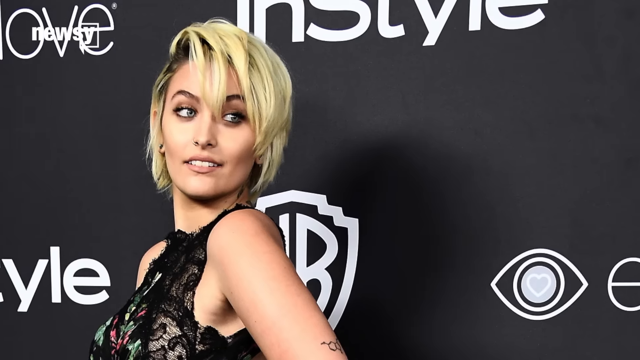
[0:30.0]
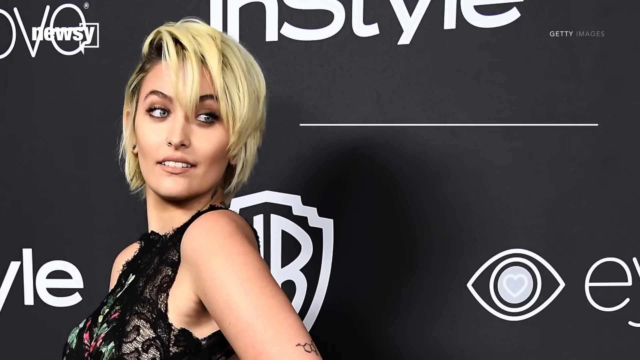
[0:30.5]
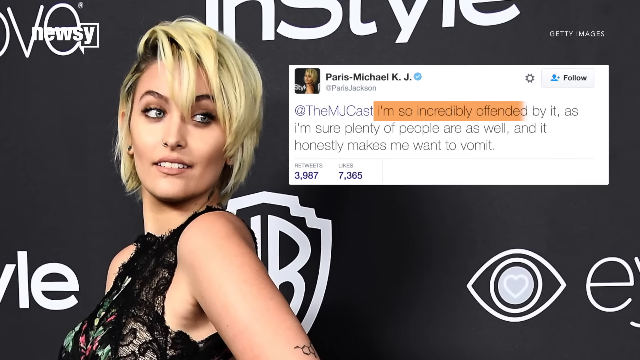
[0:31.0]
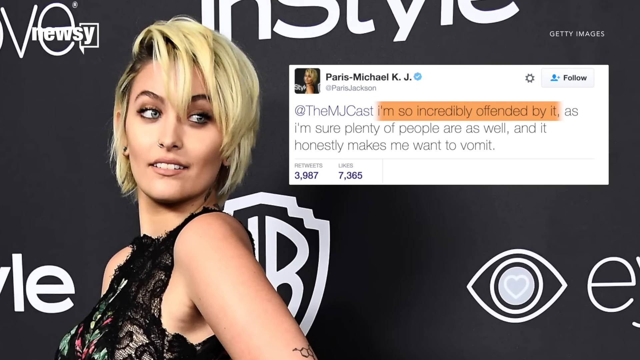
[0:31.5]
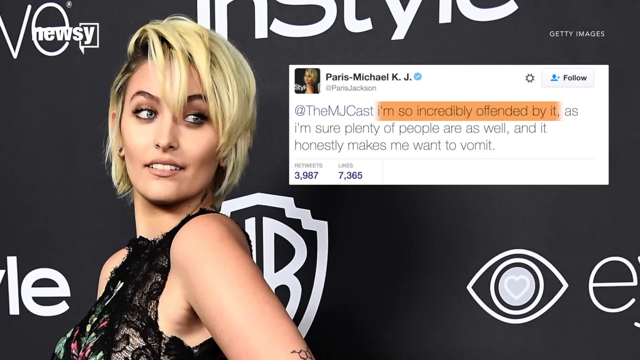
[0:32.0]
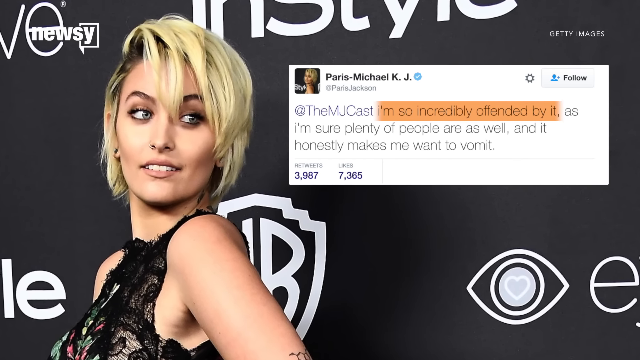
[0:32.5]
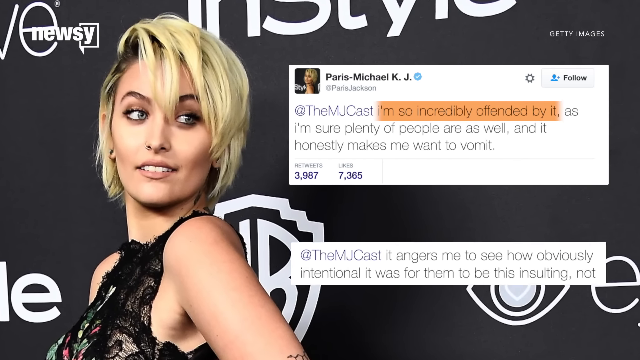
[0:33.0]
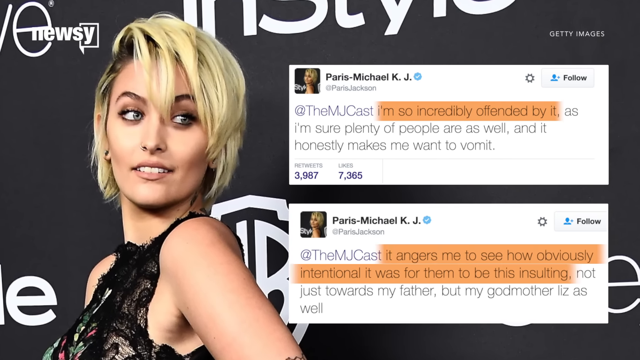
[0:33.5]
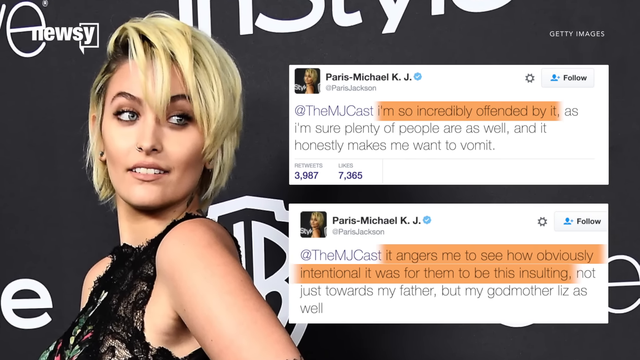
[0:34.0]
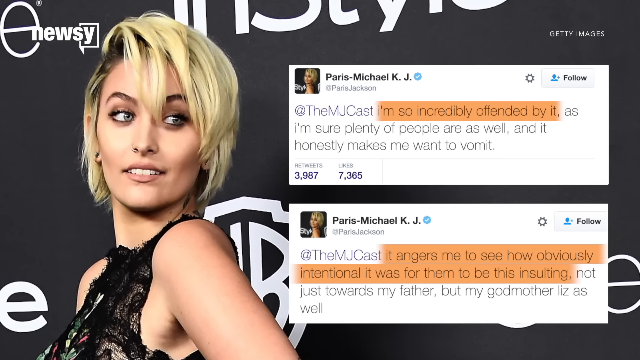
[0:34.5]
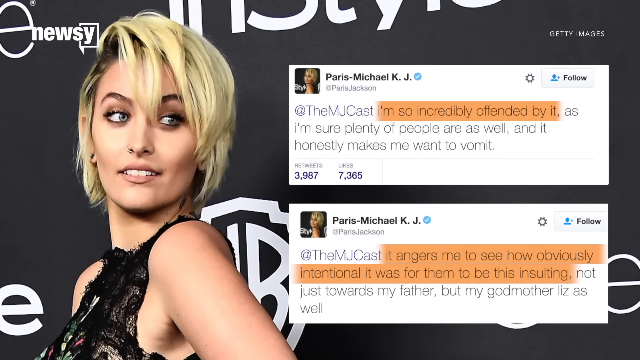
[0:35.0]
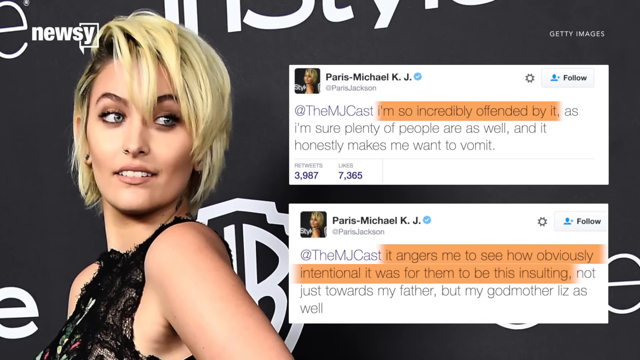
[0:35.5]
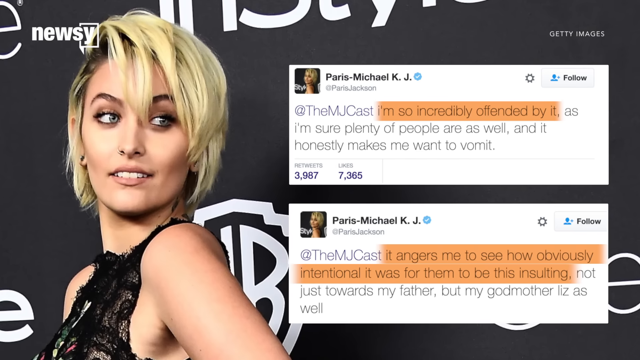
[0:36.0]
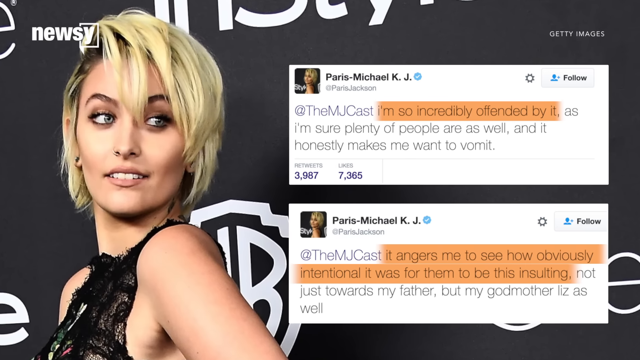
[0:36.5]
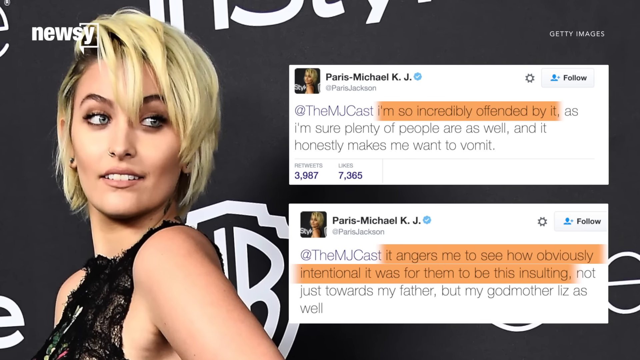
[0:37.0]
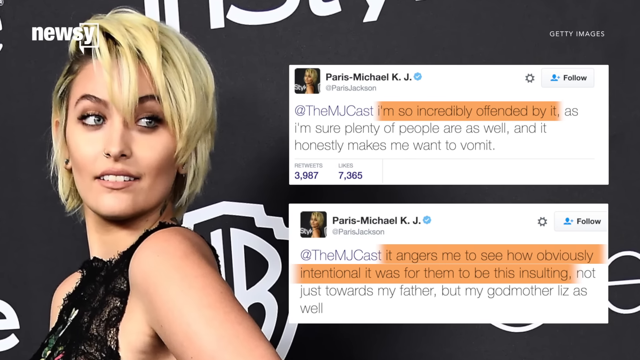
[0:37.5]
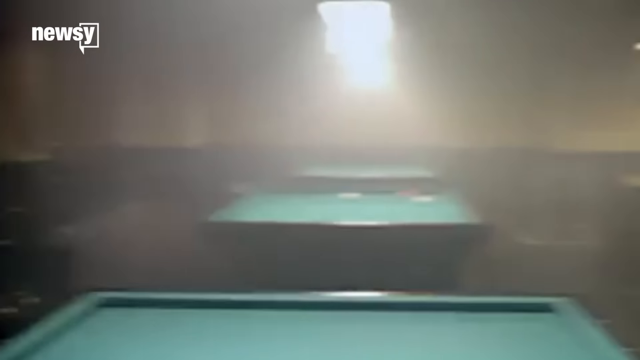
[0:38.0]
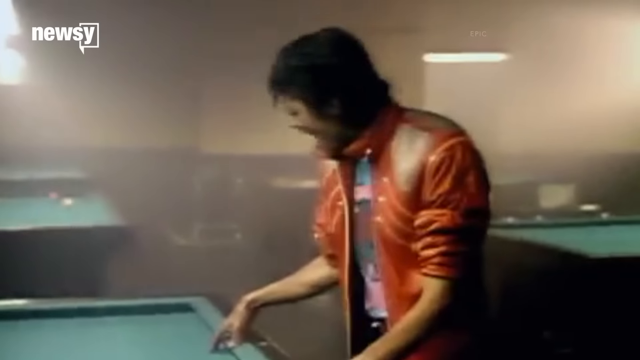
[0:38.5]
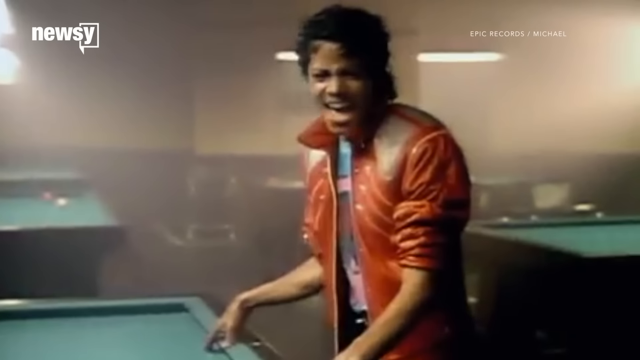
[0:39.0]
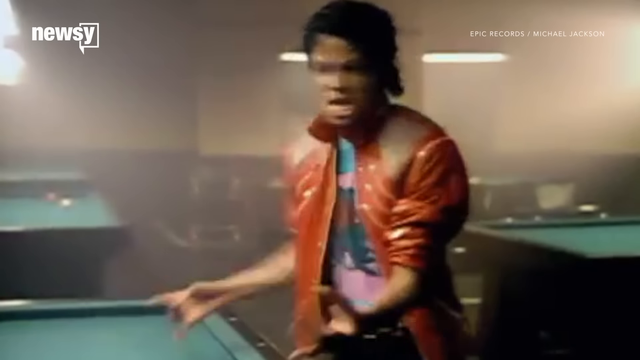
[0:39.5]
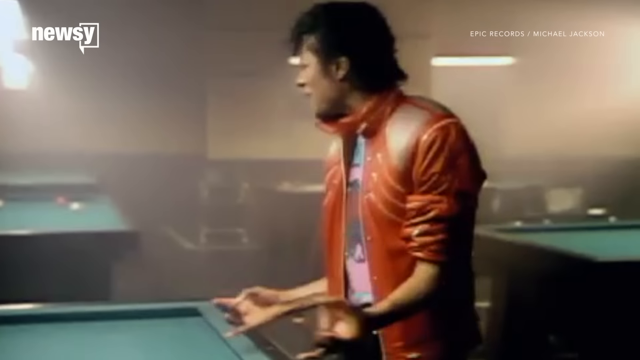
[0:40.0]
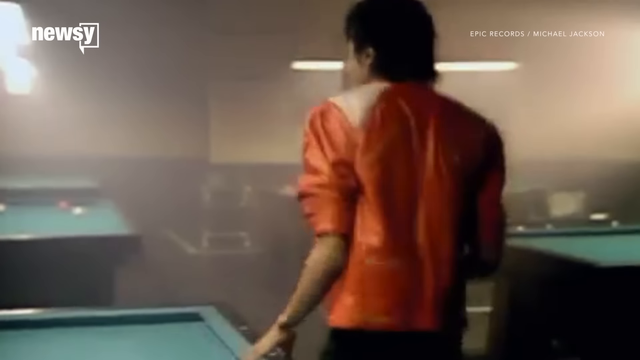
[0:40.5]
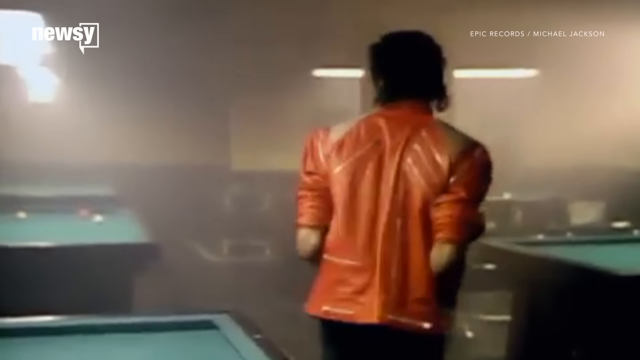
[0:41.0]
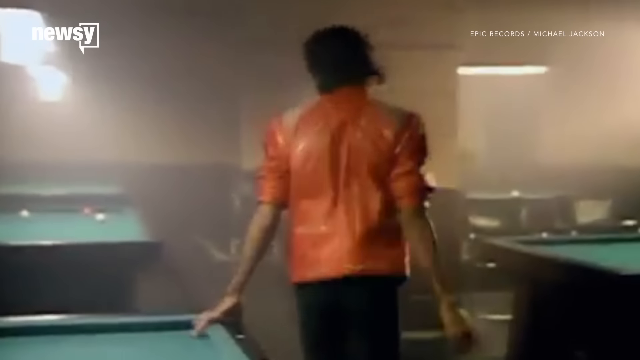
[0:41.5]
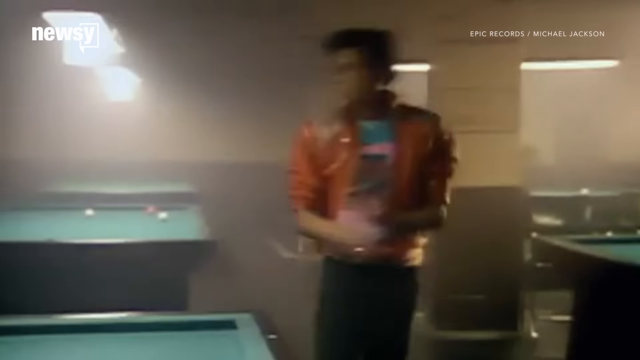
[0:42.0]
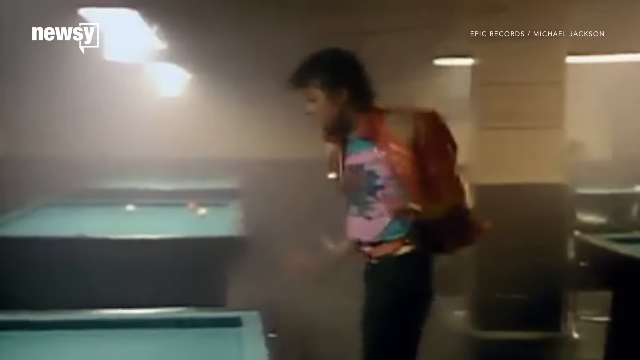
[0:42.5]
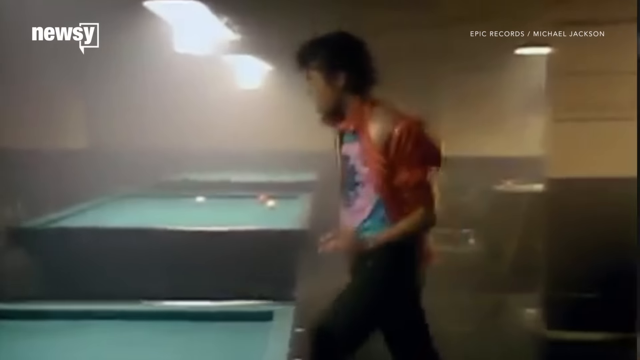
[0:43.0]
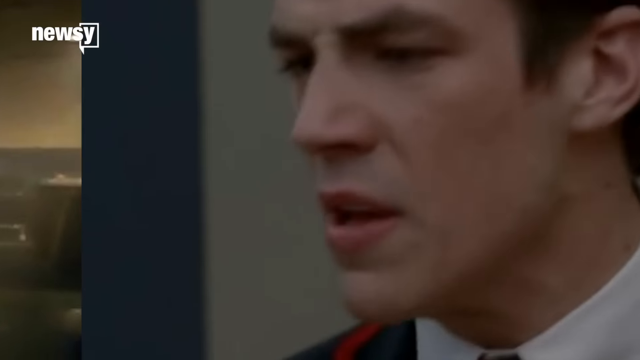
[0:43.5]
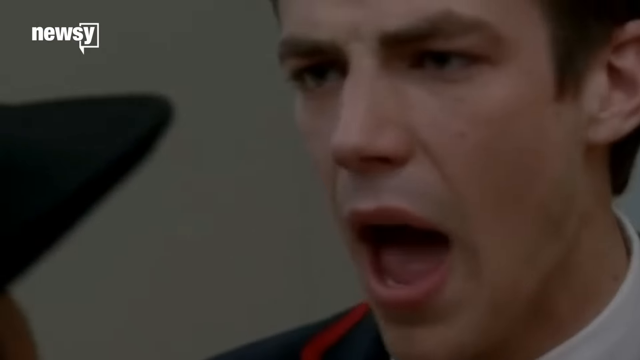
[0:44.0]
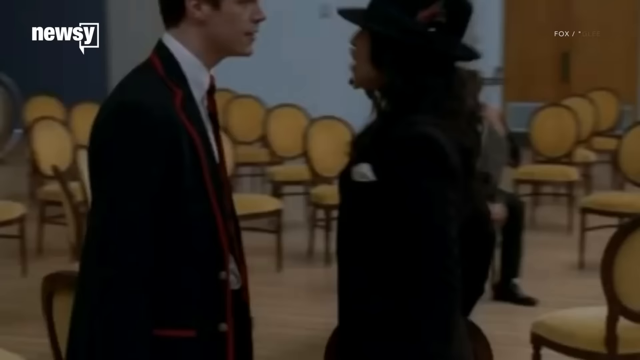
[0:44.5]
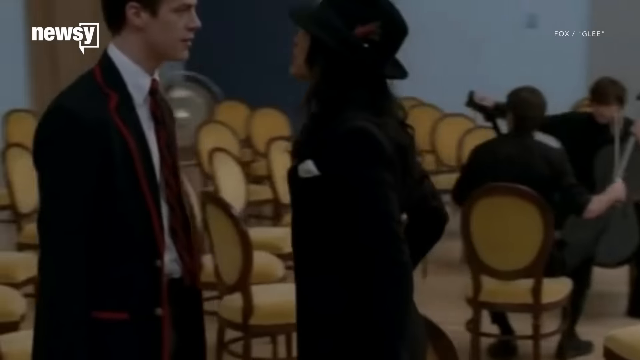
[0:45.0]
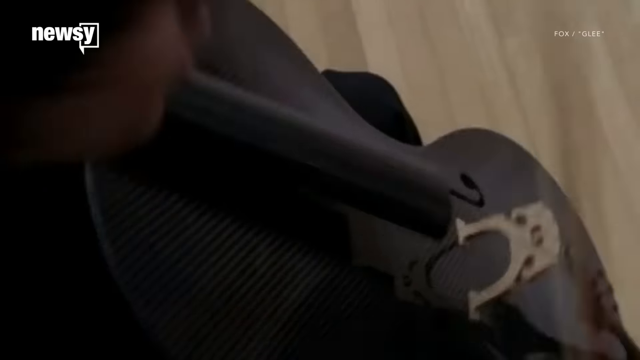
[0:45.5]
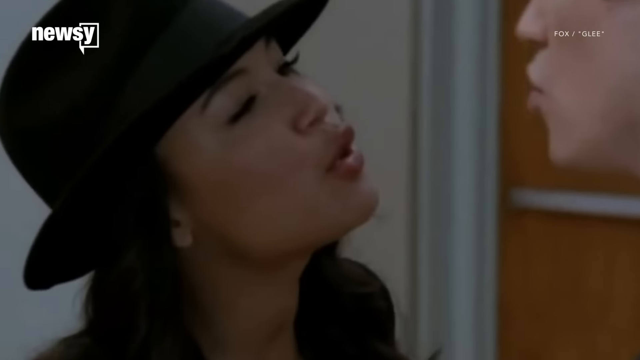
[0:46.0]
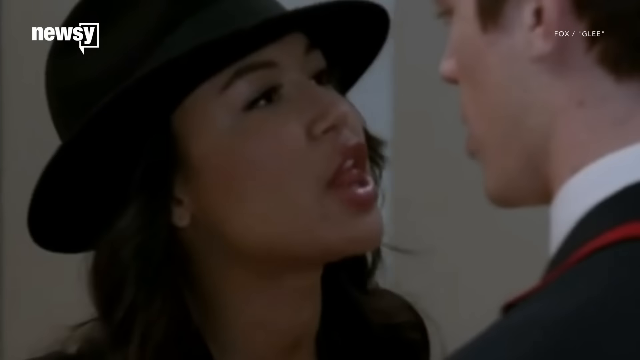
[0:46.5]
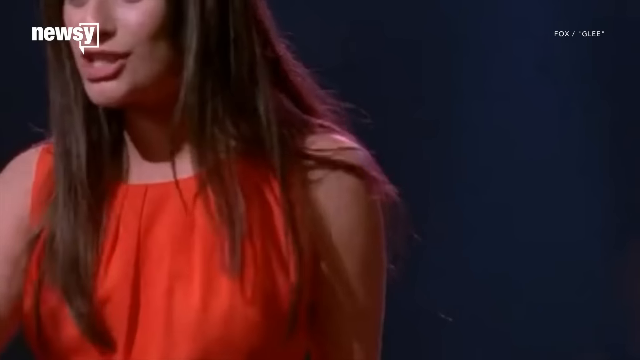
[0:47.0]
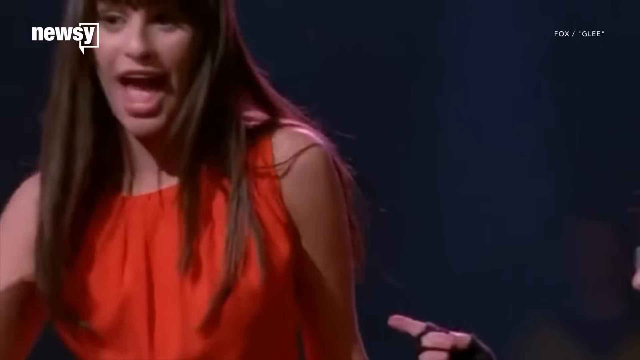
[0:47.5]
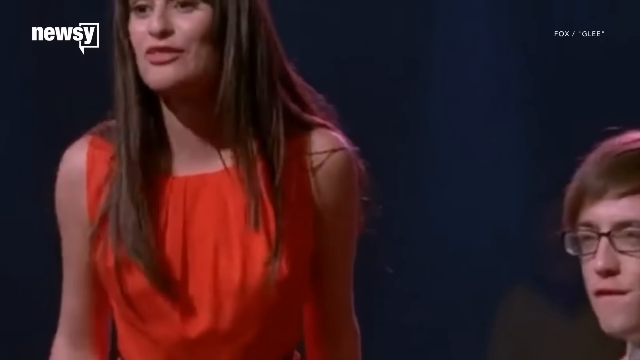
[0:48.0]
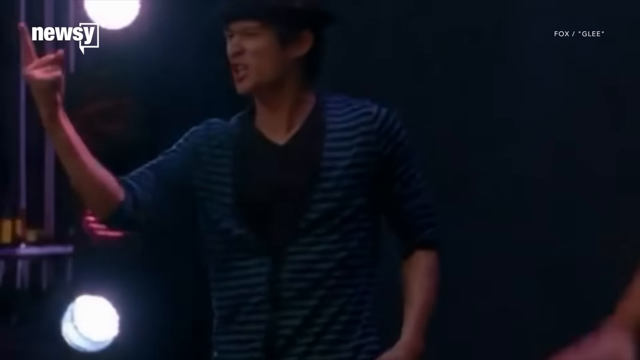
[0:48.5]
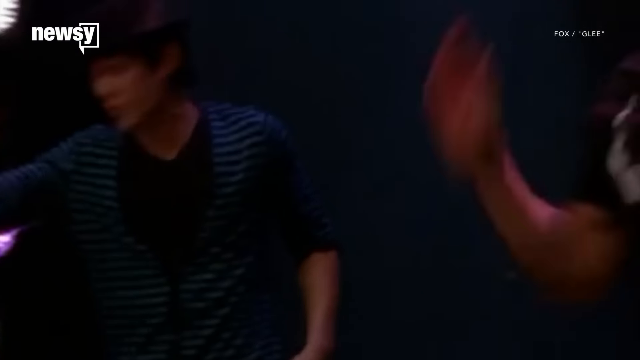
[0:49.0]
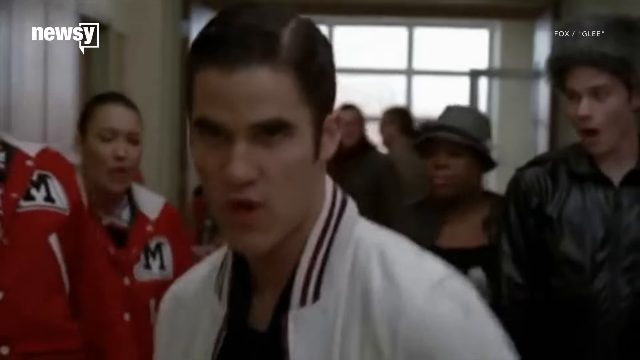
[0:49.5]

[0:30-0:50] A blonde woman in a sleeveless black dress strikes a pose on a walkway in front of a grey background with the Warner Bros logo. To the right of her is a tweet from "Paris Michael KJ," with the username Paris Jackson, mentioning the MJ cast. Text highlighted in orange reads "I'm so incredibly offended by it," and the tweet continues "as I am sure plenty of people are as well, and it honestly makes me want to vomit." It has been retweeted 3,987 times and has 7,365 likes. Below it is another tweet from Paris Michael KJ mentioning the MJ cast, with text highlighted in orange reading "It angers me to see how obviously intentional it was for them to be this insulting," followed by black text on a white background that includes "my father, but my godmother." A Twitter follow button is visible. A scene from Michael Jackson's Beat It music video follows: Michael Jackson, in a red jacket, stands beside a snooker table and dances, spinning around and then doing his kick. The video transitions to a man in a suit and a woman in a hat, both looking at themselves, followed by a montage of various music videos.